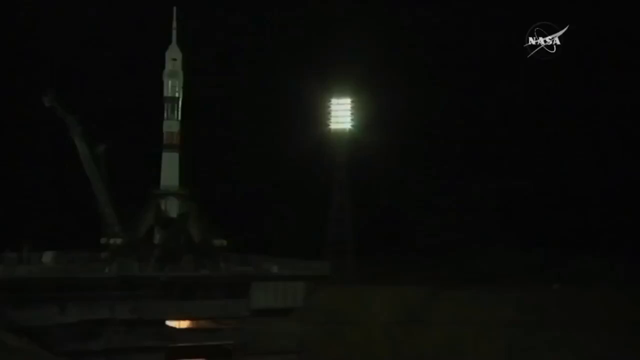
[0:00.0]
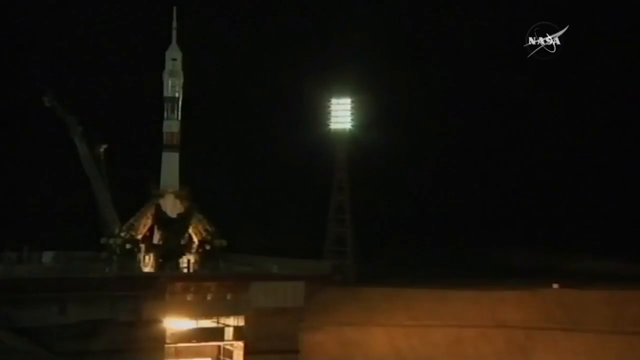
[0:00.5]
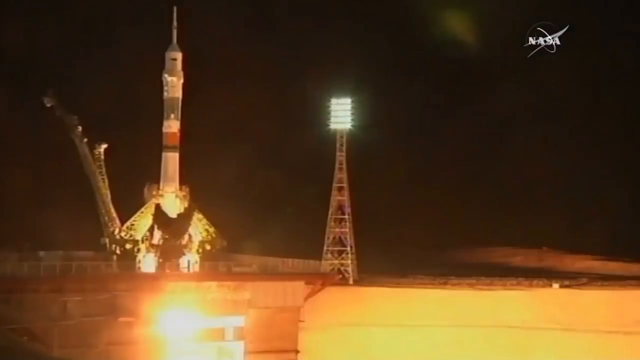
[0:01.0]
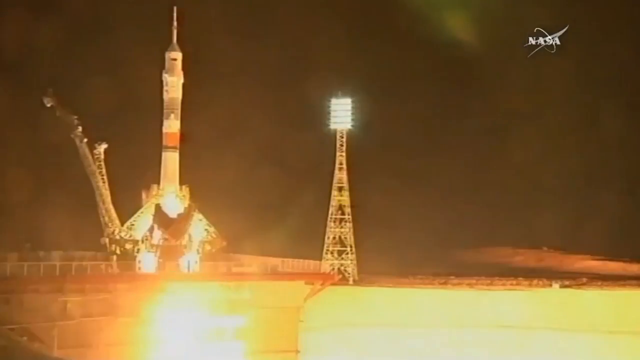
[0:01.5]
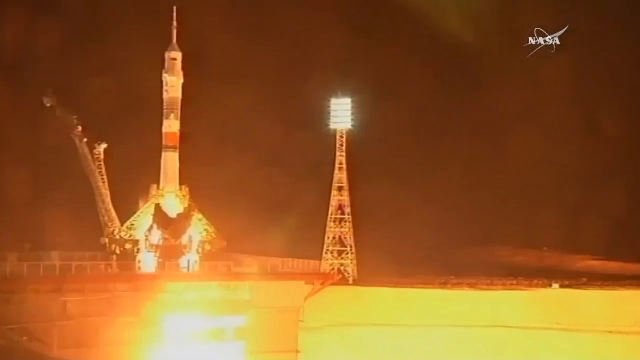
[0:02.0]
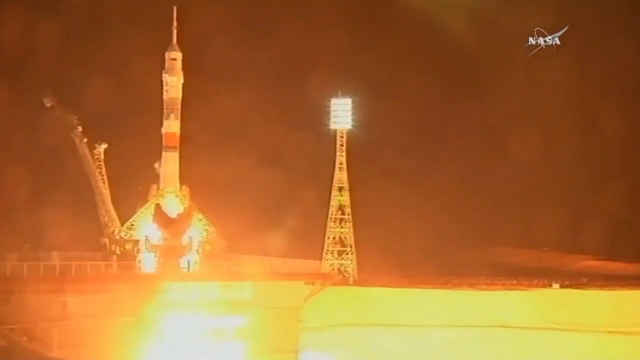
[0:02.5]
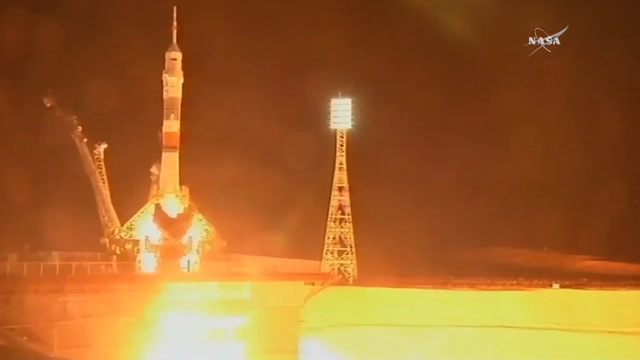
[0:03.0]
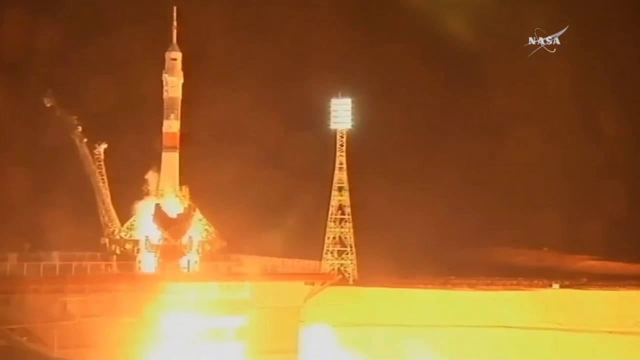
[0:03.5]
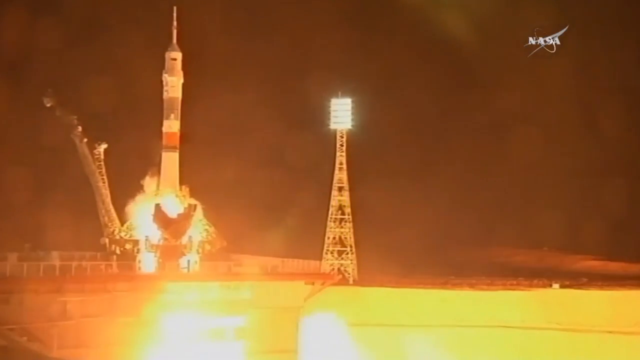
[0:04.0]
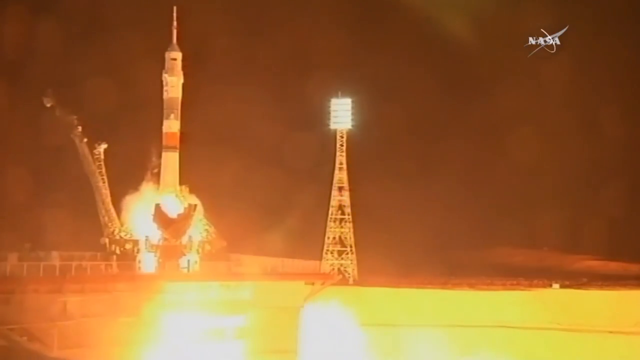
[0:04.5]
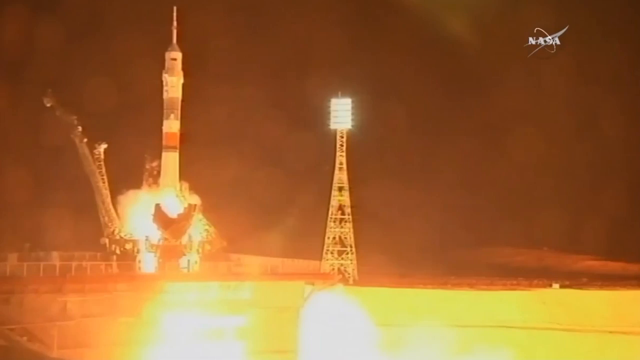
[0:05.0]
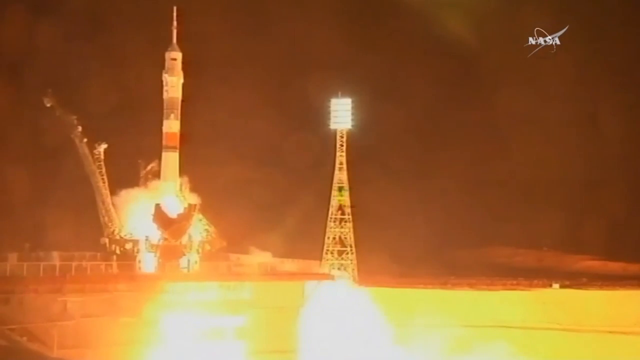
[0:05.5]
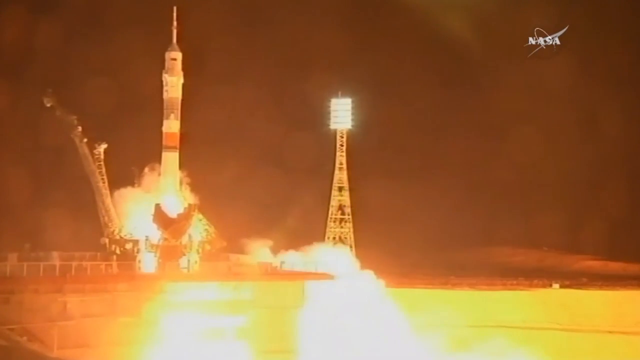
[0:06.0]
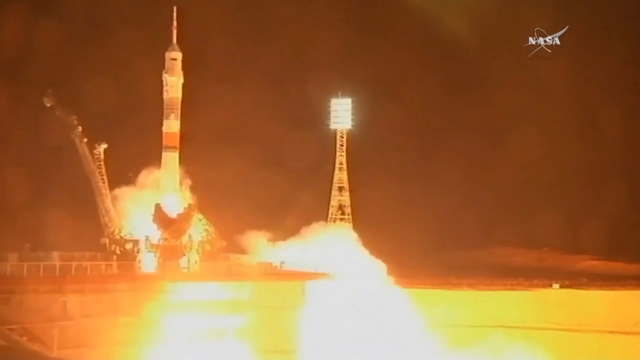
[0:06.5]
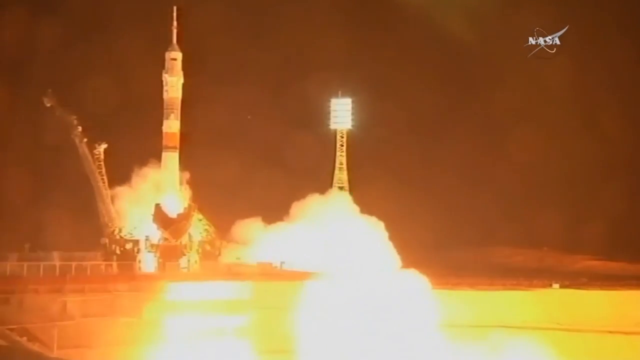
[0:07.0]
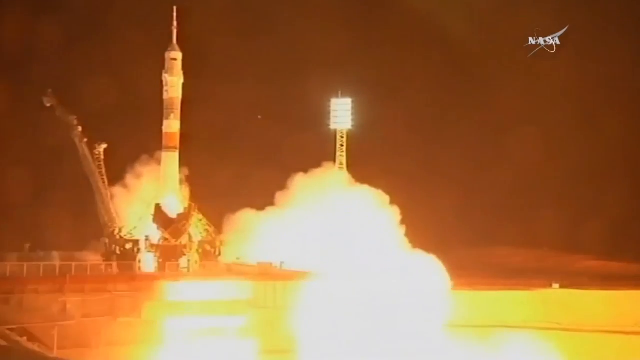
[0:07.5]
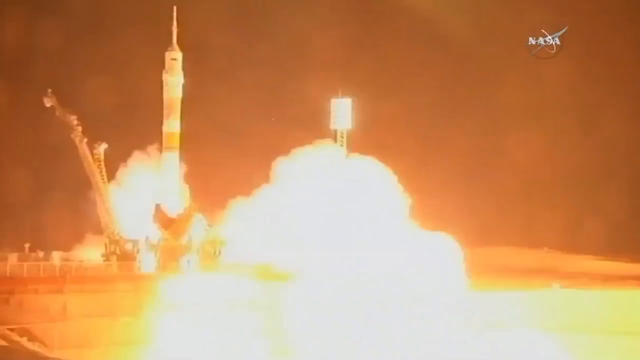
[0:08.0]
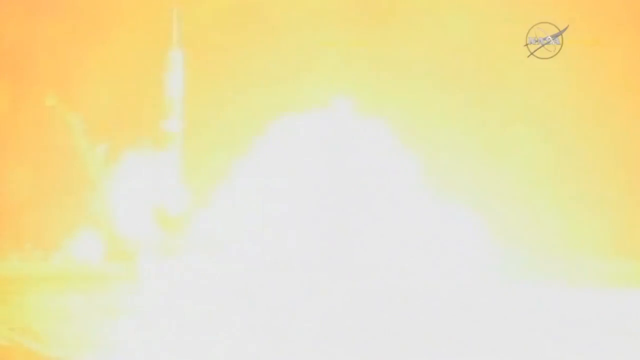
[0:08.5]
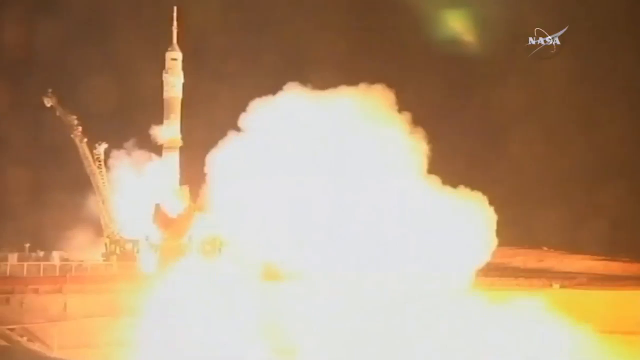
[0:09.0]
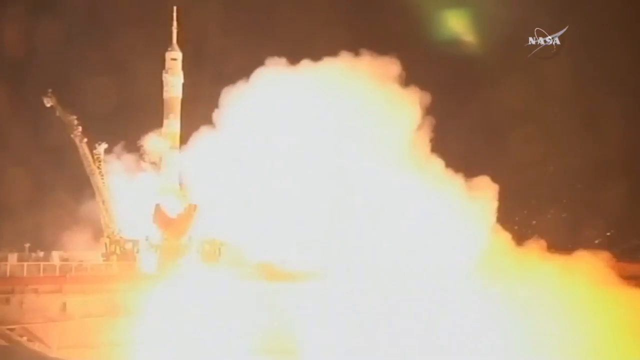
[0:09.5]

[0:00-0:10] Text about NASA appears, and then a rocket ship is seen in the dark at nighttime, apparently about to take off. The shuttle then takes off: the rocket fires up and a lot of smoke comes out. A huge explosion occurs at the back end as it takes off. No people are visible watching. It is either very late at night or early in the morning, and the exhaust shows up against the dark.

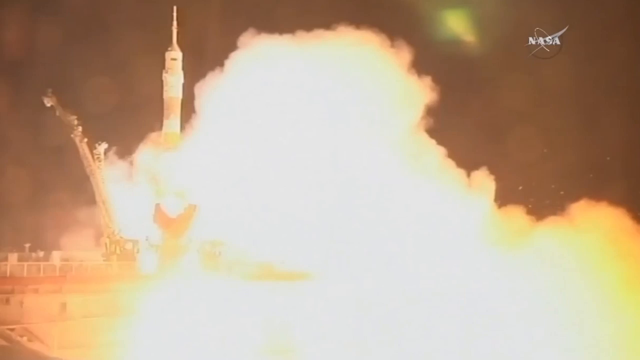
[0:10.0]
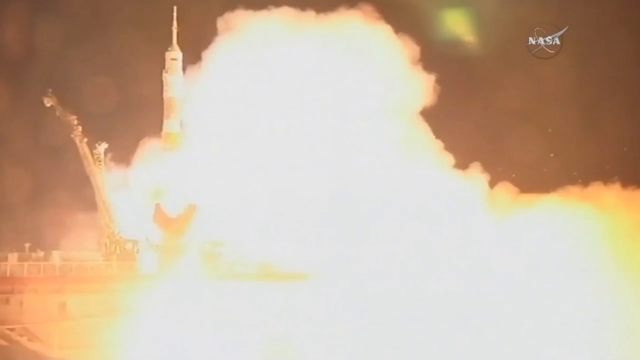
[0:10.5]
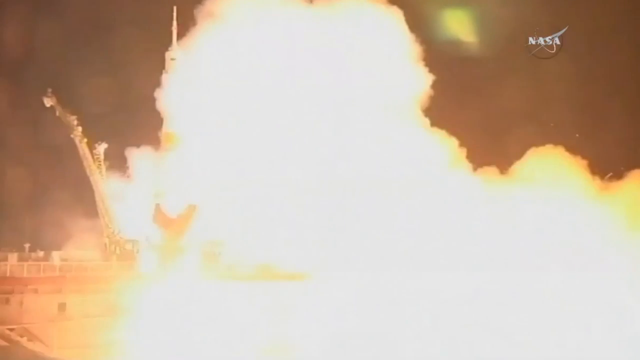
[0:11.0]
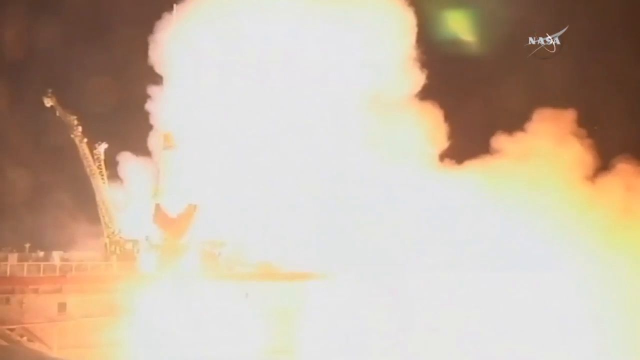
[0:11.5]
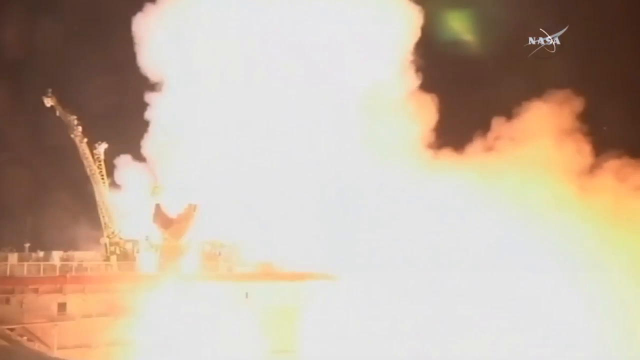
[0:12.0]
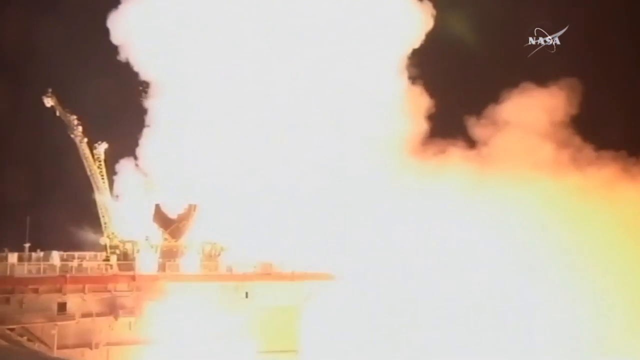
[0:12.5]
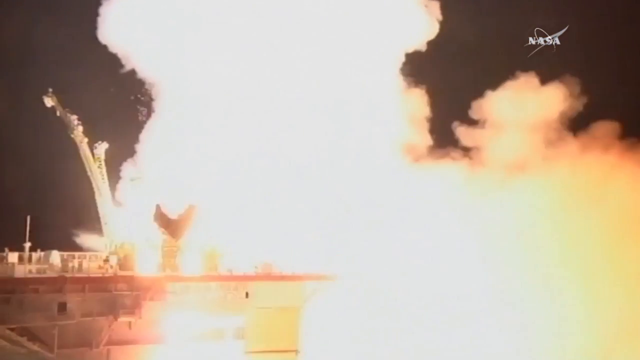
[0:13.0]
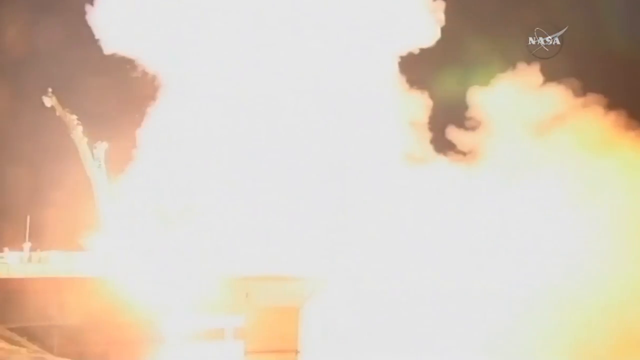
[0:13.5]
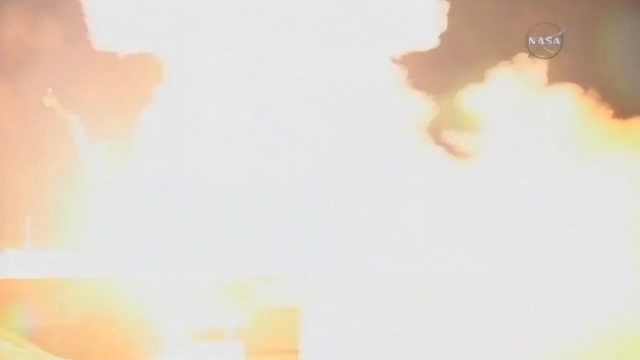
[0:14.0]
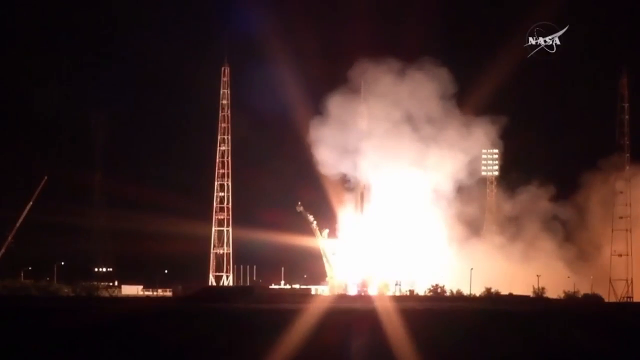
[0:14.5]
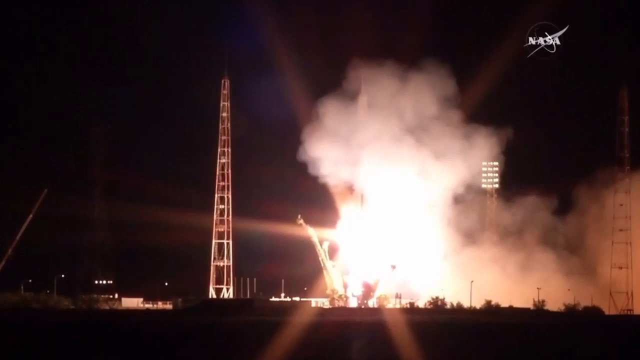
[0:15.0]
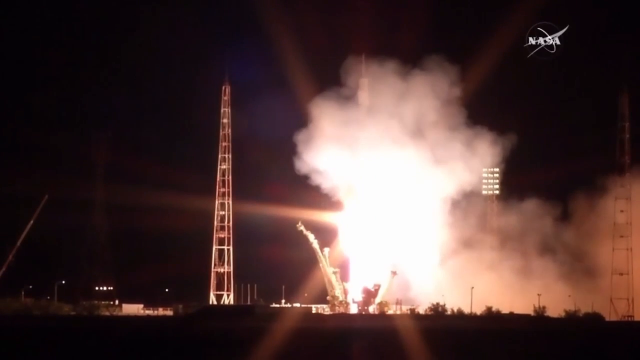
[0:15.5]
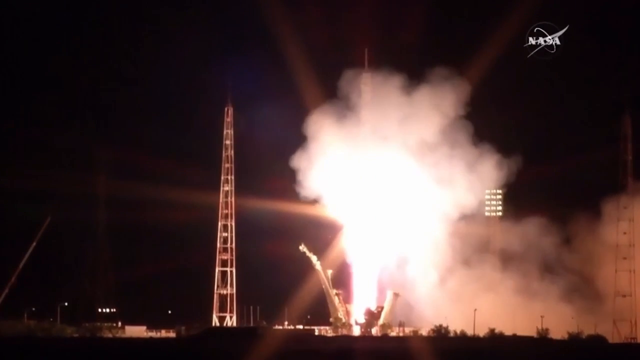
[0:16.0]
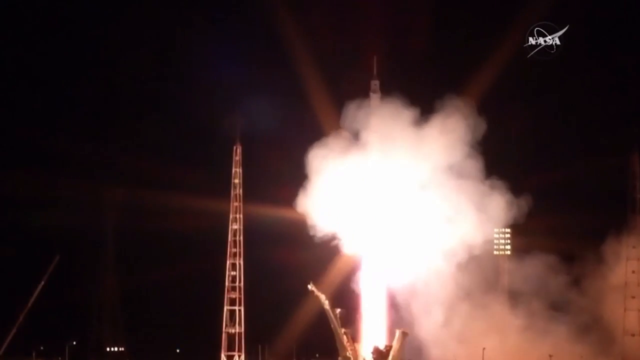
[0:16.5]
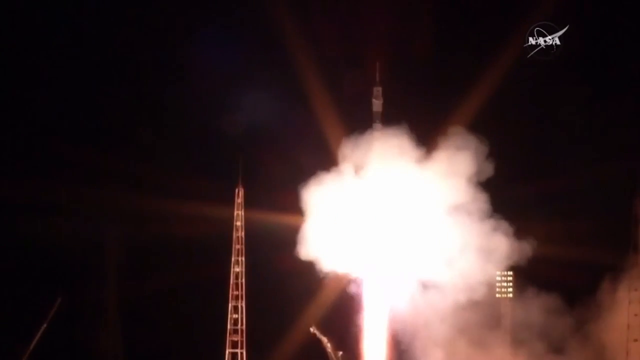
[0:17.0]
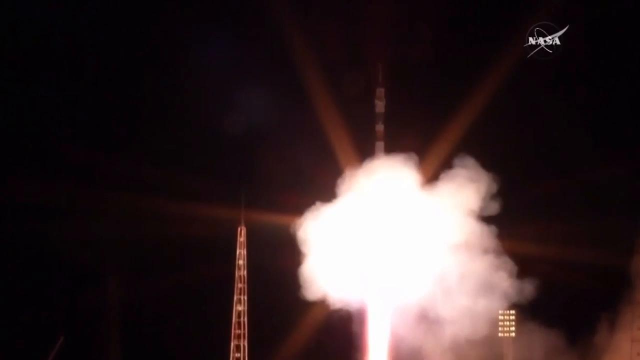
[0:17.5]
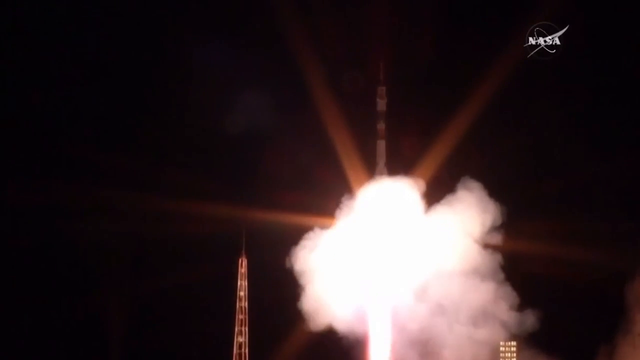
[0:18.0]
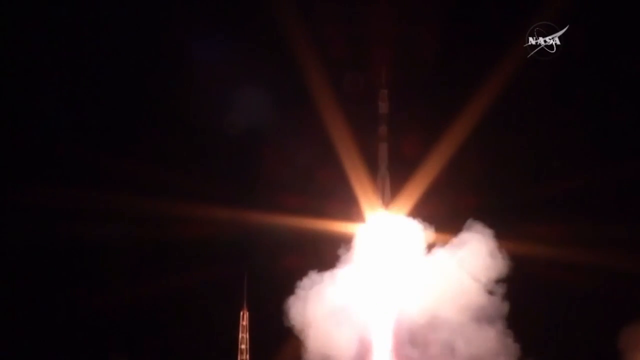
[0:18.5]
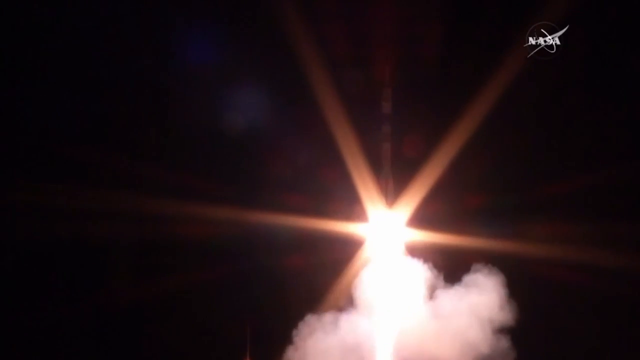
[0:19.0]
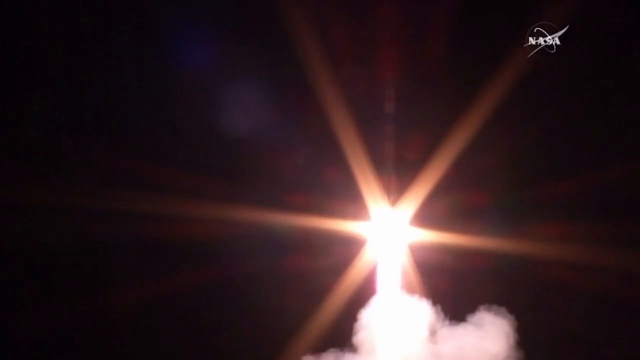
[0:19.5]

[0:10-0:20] A rocket or space shuttle of some type takes off at nighttime amid a lot of smoke, with flames from the exhaust visible as it starts to go up. "NASA" is on the screen. No people are visible around it. There is smoke everywhere. Another view then shows the rocket going up into the sky, with a huge bright light coming from its back end.